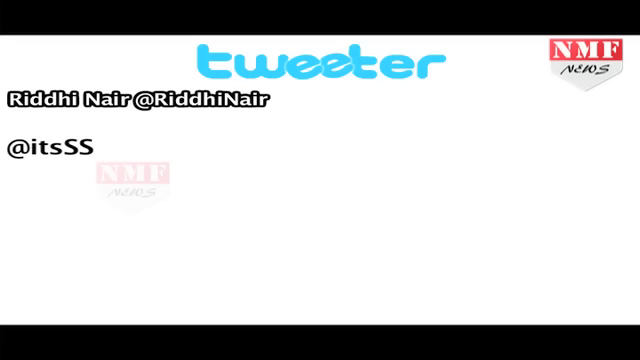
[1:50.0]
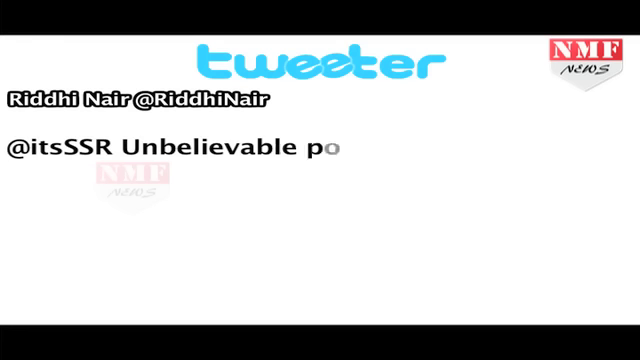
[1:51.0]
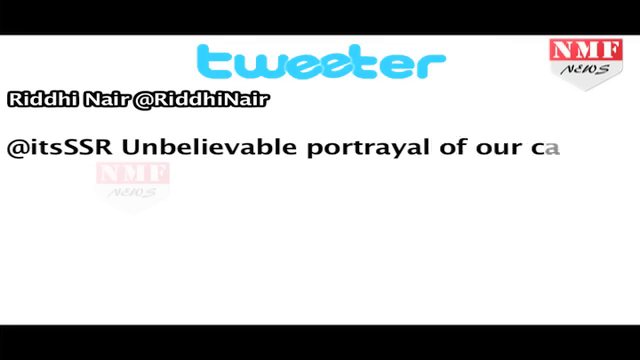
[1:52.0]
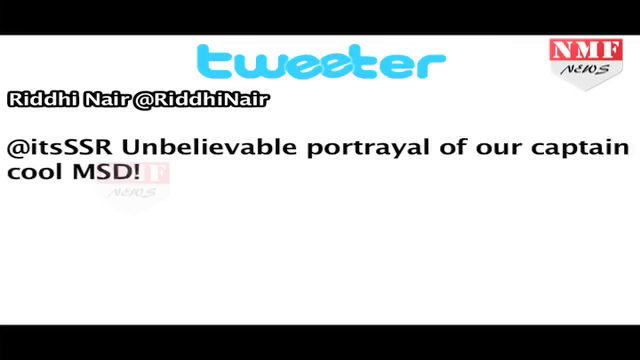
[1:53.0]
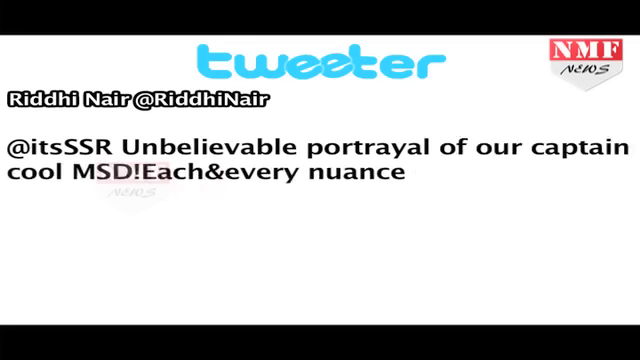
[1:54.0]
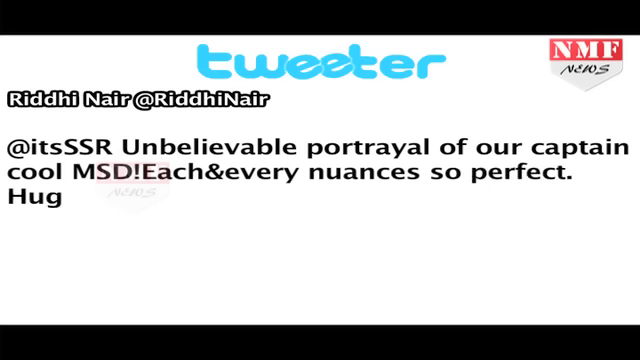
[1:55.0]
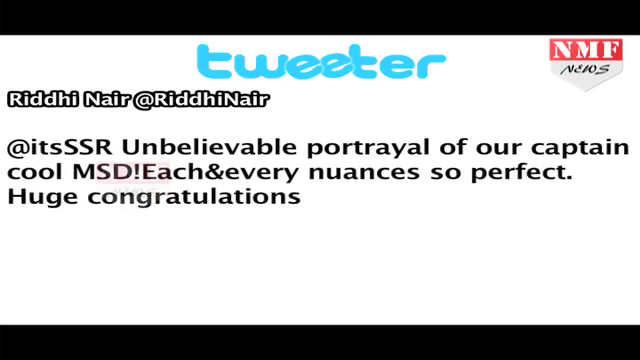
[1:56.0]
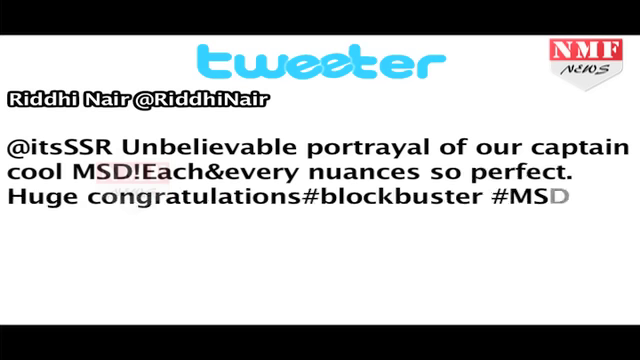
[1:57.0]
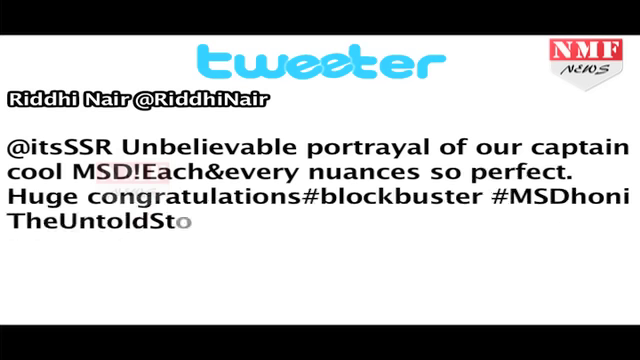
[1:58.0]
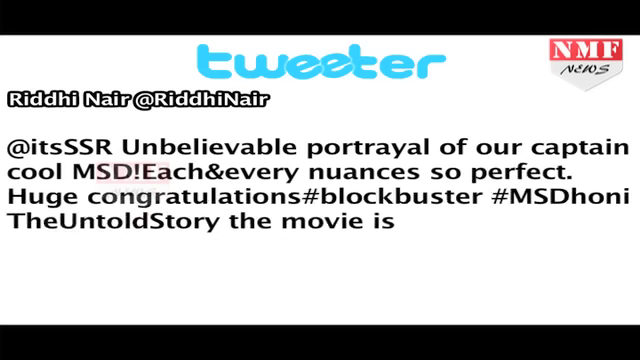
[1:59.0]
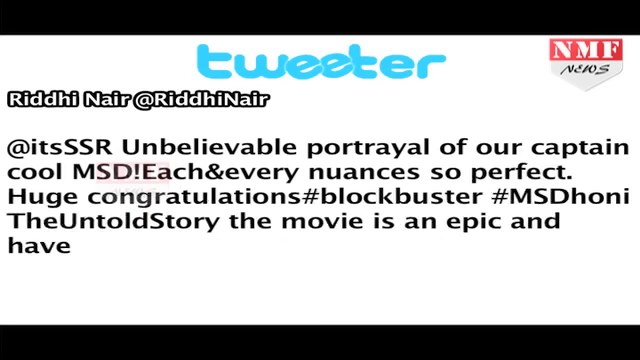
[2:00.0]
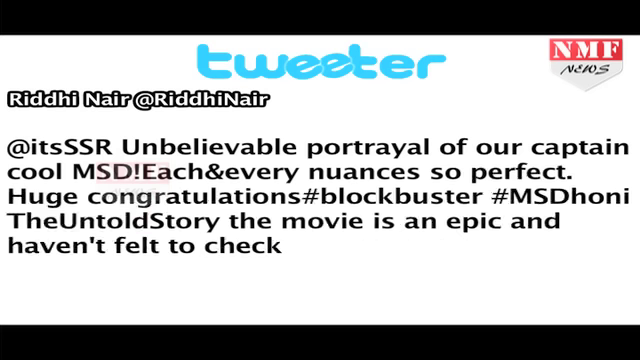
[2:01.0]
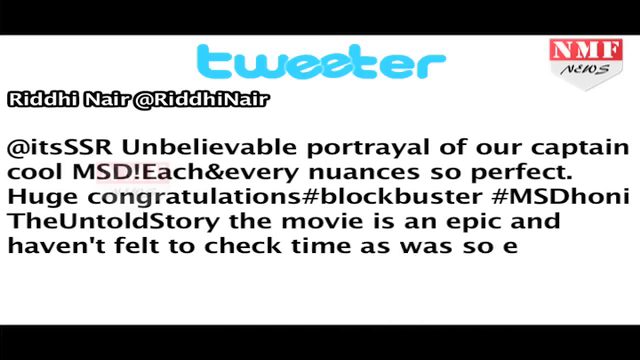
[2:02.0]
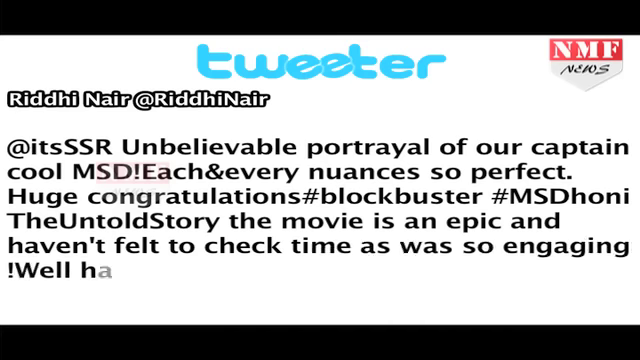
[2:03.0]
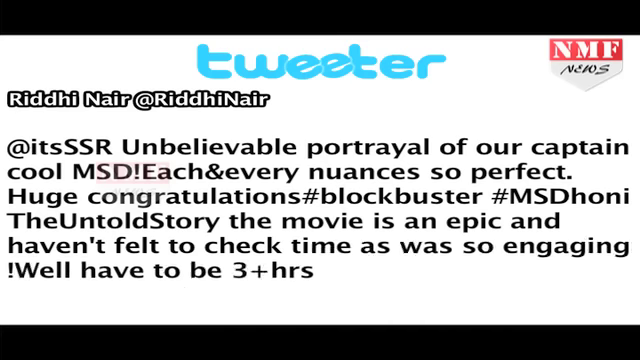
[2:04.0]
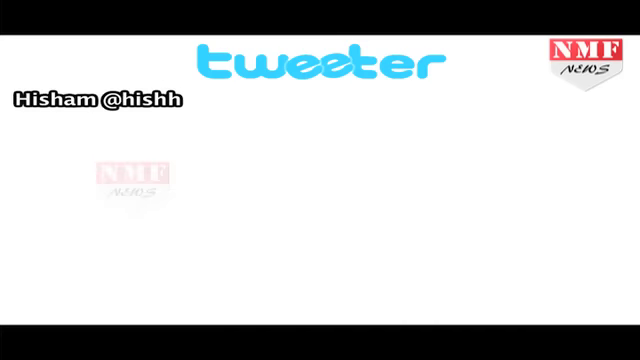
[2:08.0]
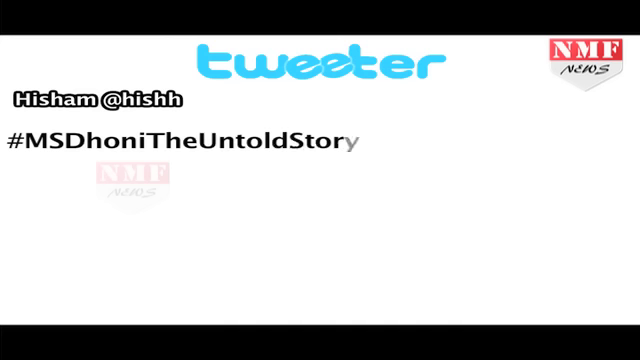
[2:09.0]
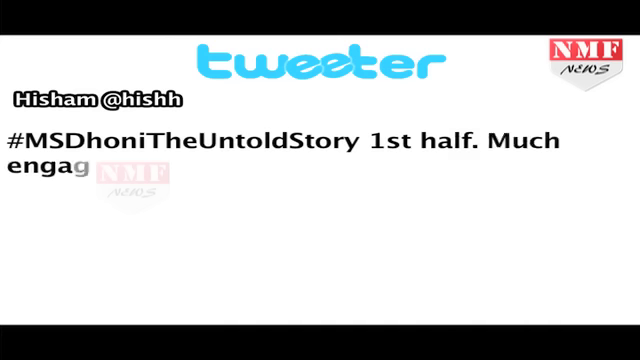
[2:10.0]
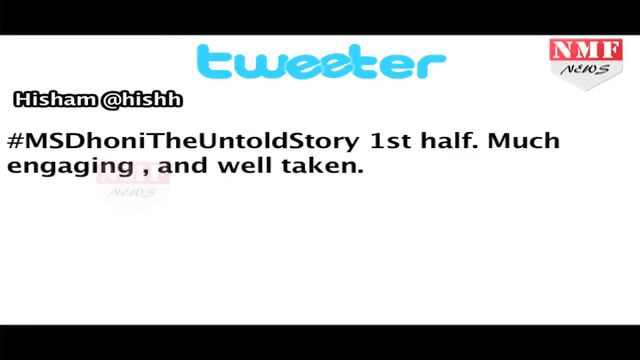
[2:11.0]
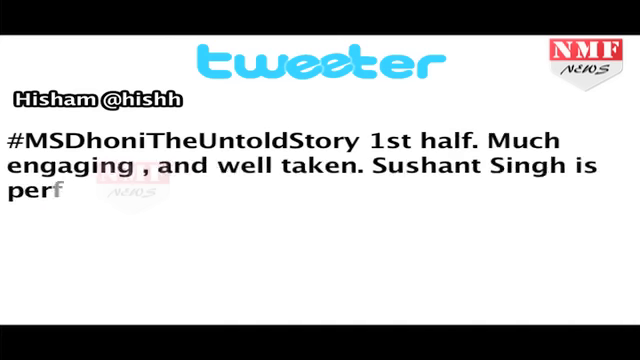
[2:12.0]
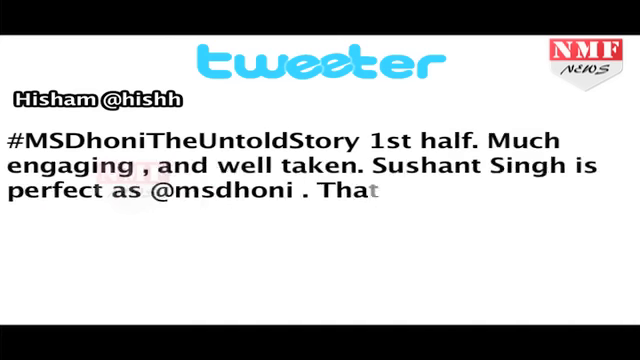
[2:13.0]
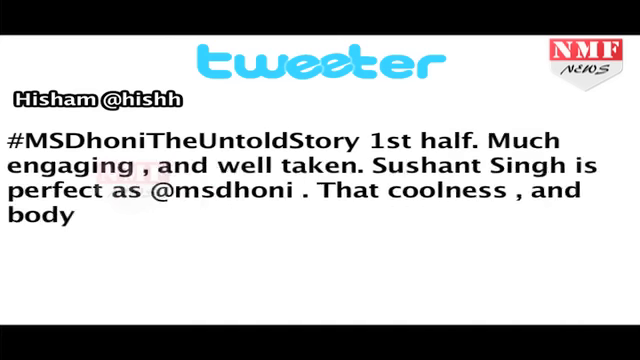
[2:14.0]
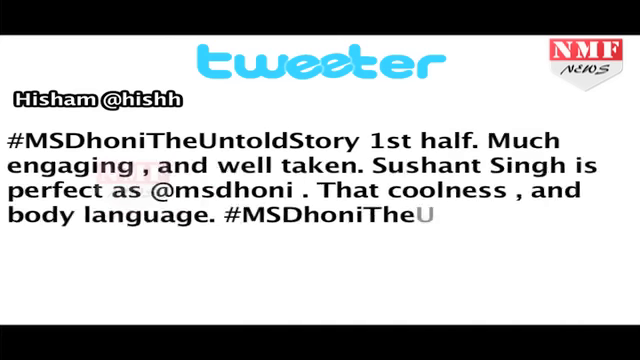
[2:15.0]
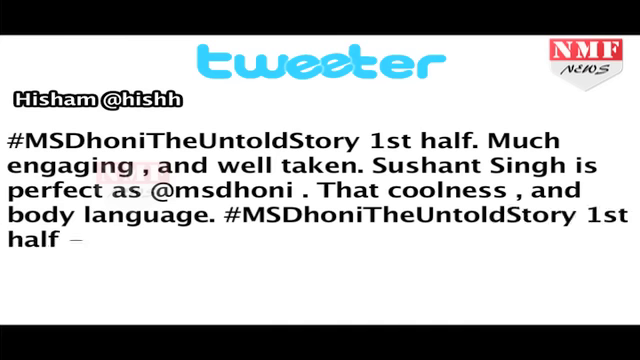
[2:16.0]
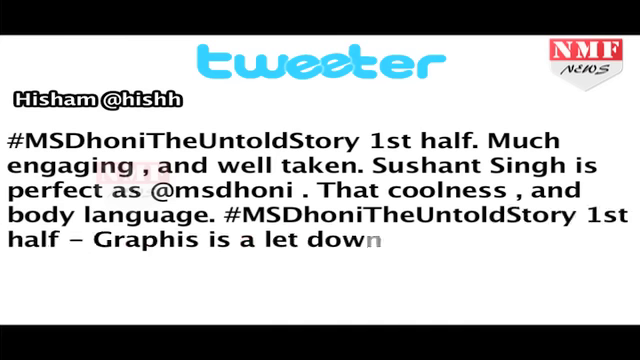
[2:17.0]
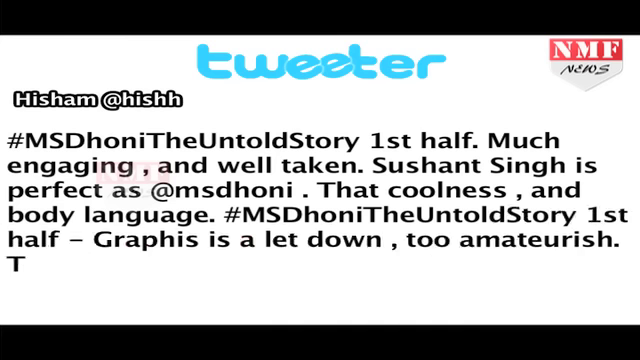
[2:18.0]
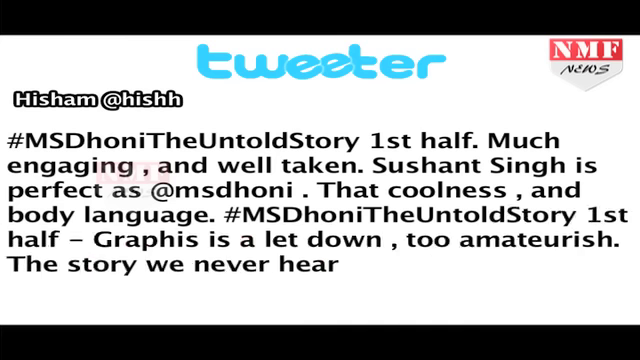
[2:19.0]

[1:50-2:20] A typed social media comment is shown on NMF News against a white background. The word "tweeter" is in blue at the top, the initials "NMF" are in red, and the word "news" is in script below. The comment is from RIDDHINAIR @RIDDHINAIR and reads "unbelievable portrait of our captain cool MSD! Each and every nuance", followed by "much engaging and well-taken. Shashank Singh is perfect as MS Dhoni. That coolness and body language. MS Dhoni, the untold story, first half. Graphics is a letdown, too amateurish." Another comment reads "unbelievable portrayal of our captain. Huge congratulations, blockbuster, the untold story. The movie is an epic and haven't felt to check time."